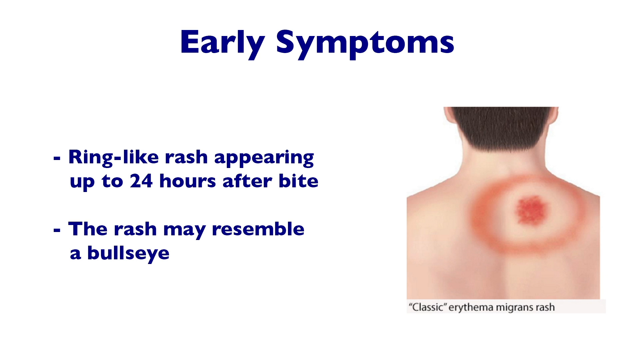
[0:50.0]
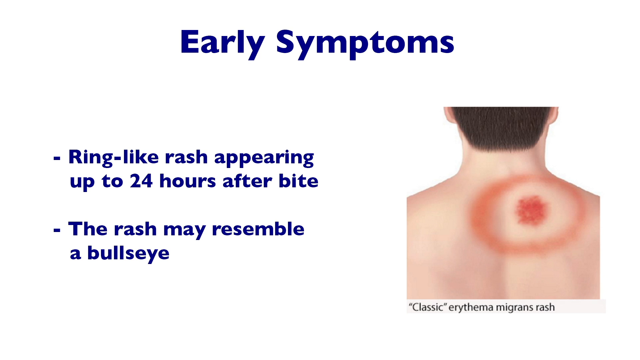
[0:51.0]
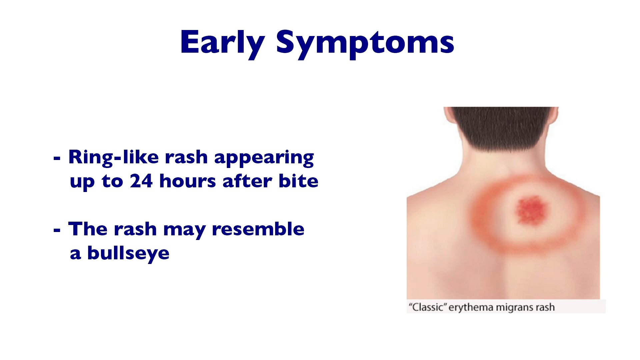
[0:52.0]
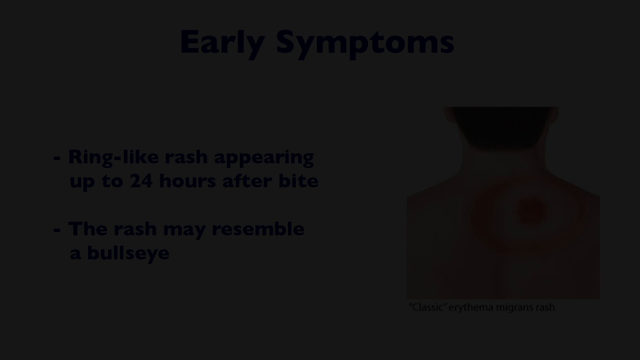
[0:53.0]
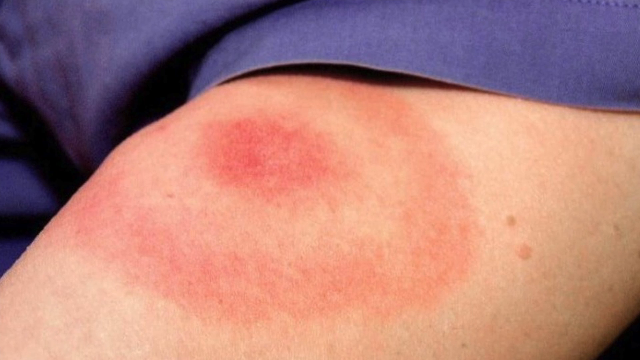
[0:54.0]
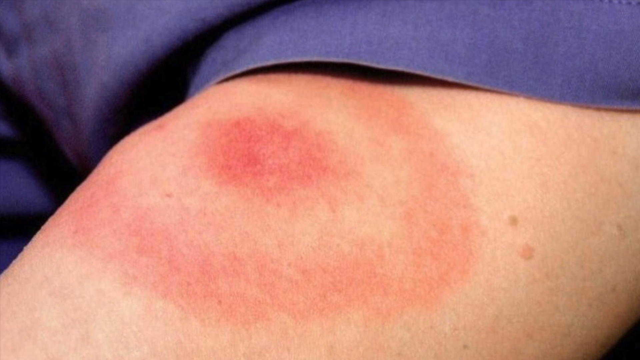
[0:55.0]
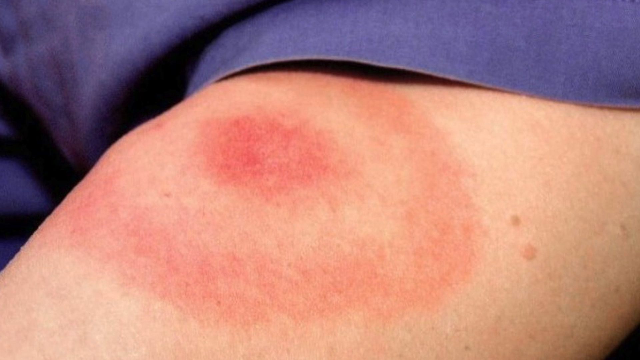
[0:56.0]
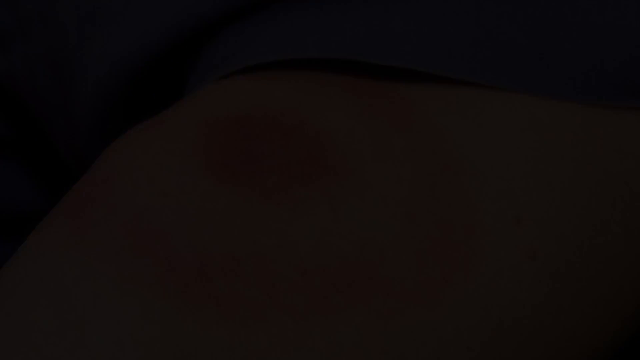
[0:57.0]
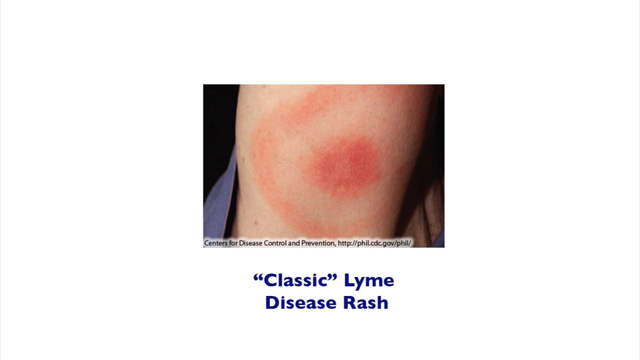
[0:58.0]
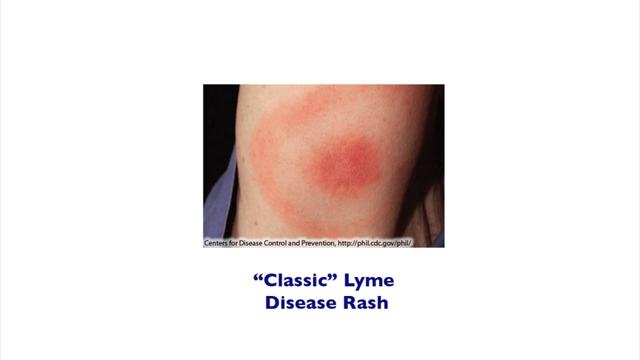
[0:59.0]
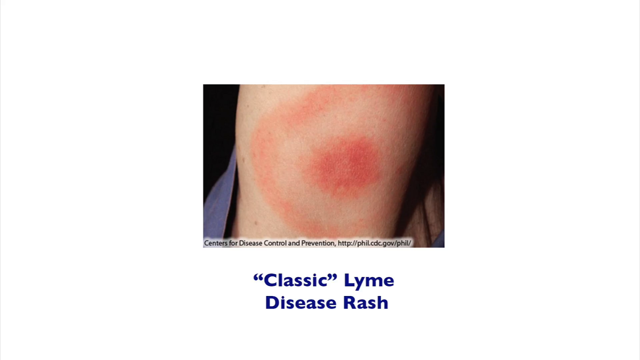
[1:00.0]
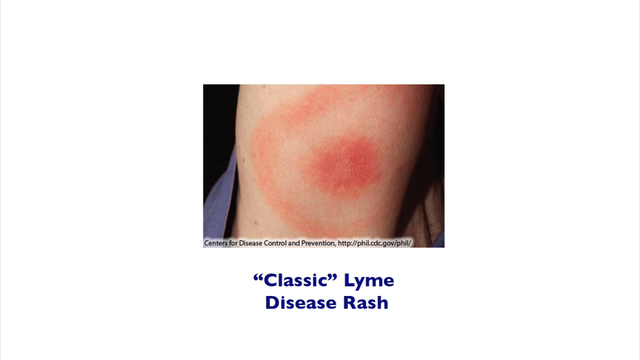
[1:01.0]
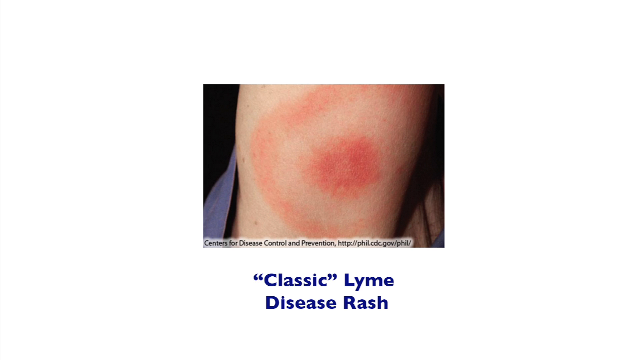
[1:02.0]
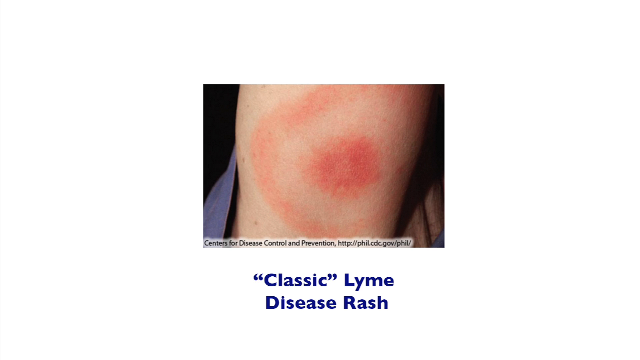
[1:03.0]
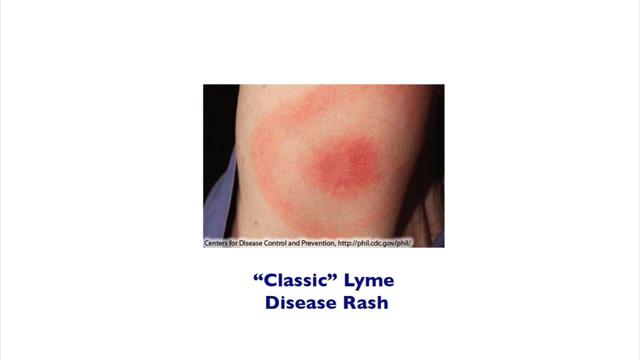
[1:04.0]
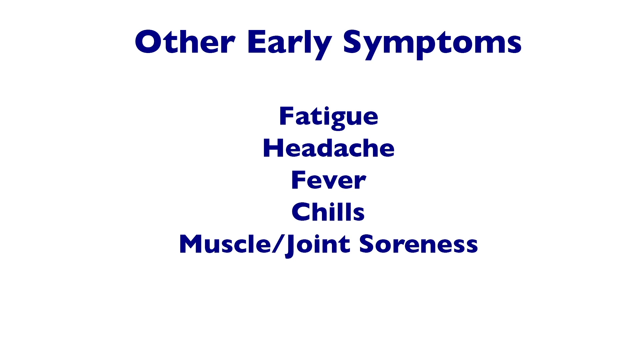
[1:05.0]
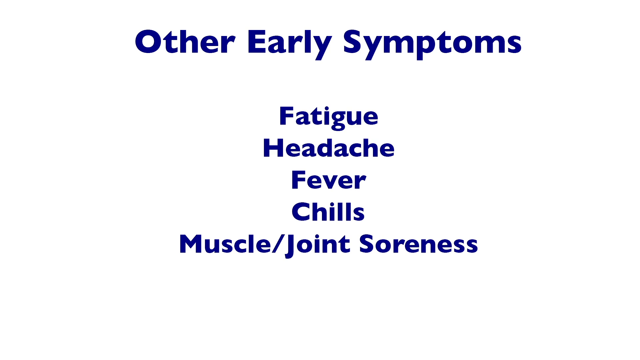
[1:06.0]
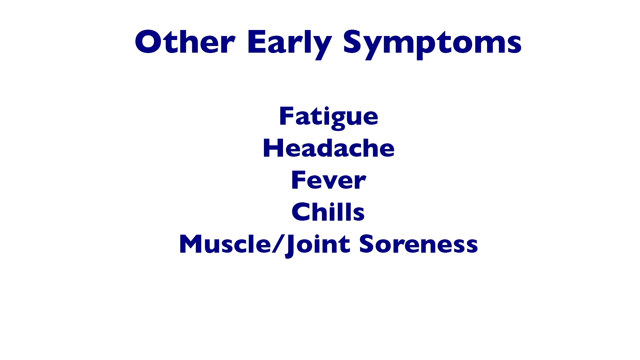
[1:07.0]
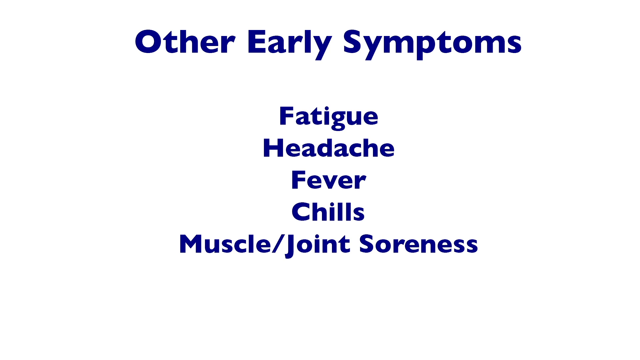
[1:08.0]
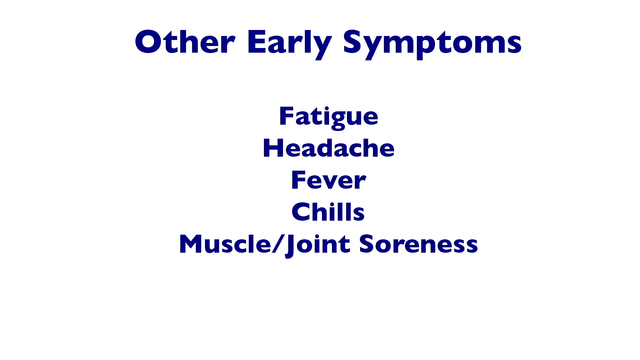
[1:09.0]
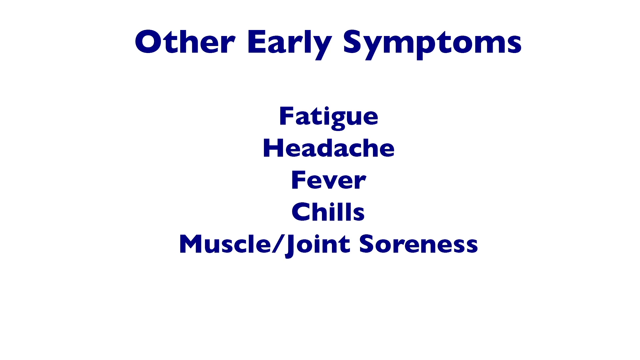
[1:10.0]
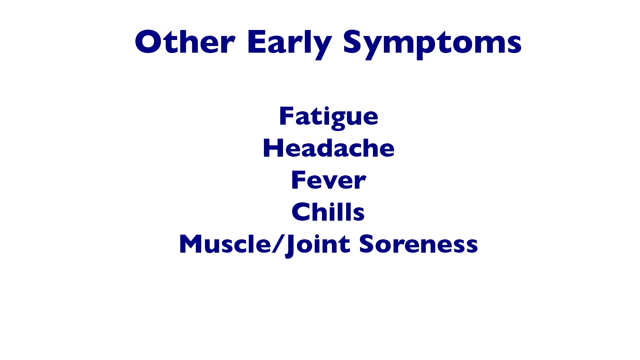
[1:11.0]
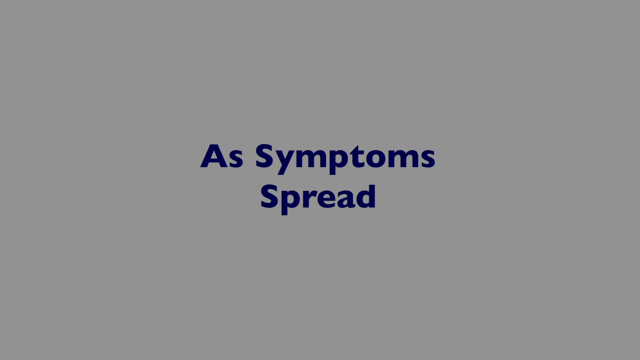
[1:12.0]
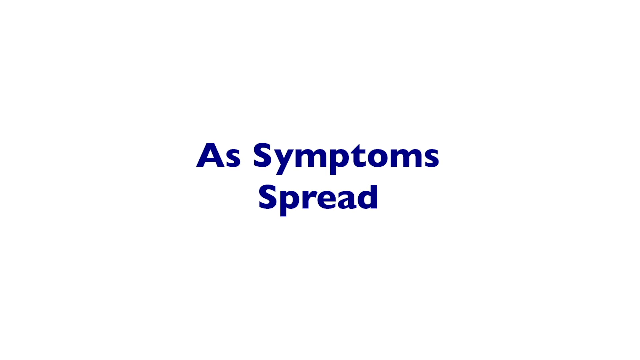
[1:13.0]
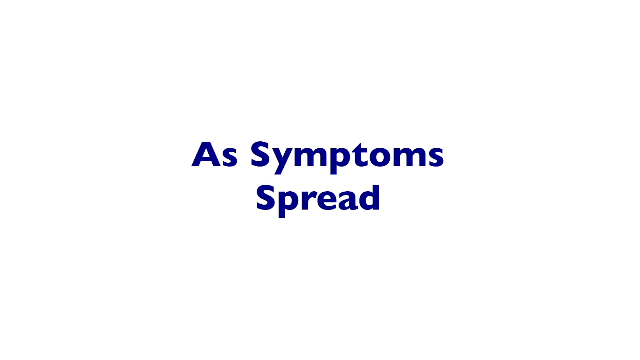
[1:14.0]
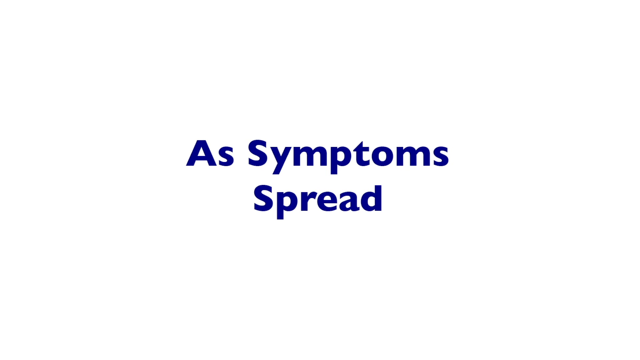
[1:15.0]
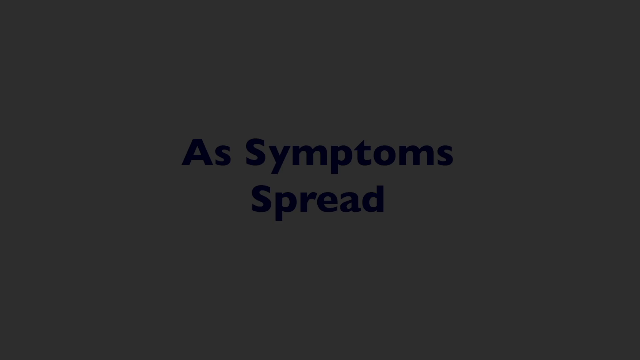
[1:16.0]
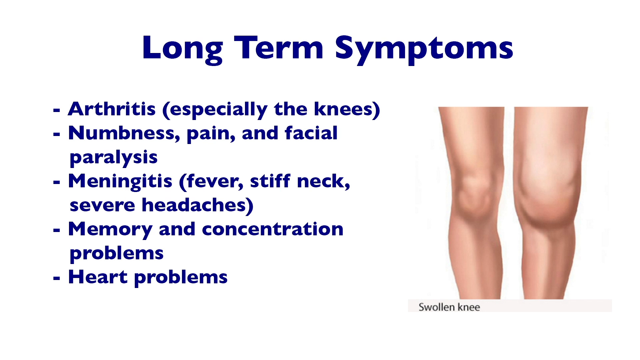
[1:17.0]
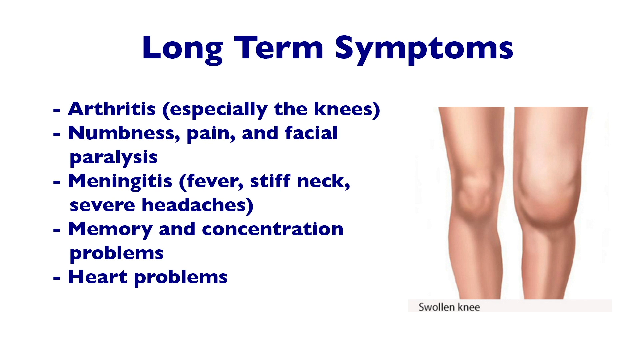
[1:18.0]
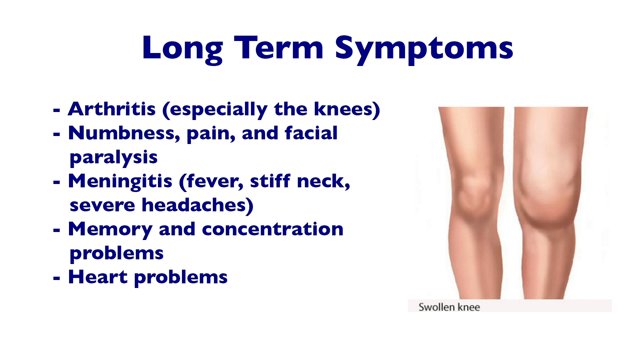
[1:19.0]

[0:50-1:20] A screen shows "early symptoms" at the top with two notes. The first says "ring-like rash appearing up to 24 hours after bite," and below it says "the rash may resemble a bullseye." On the right-hand side is a diagram of a human's back with a red ring and a circle in the center, and below it says "classic rash." Next comes a close-up image of an actual tick bite, which is very large: a giant red ring about 10 inches long with a red circle in the center. Another image shows the same type of bite, apparently on someone's knee, with "classic Lyme disease rash" below it. The background is still white. Below, it says "other early symptoms, fatigue, headache, fever, chills, muscle joints, soreness," all in dark blue text. The next screen says "as symptoms spread" and "long-term symptoms, arthritis, numbness, pain, and facial paralysis, meningitis, memory and concentration problems, and heart problems," with a diagram of two knees on the right-hand side in which the right knee is swollen.